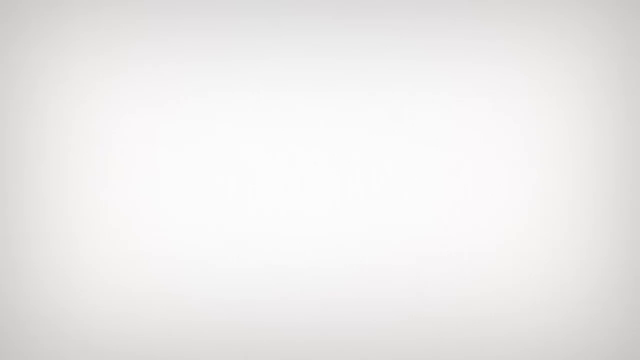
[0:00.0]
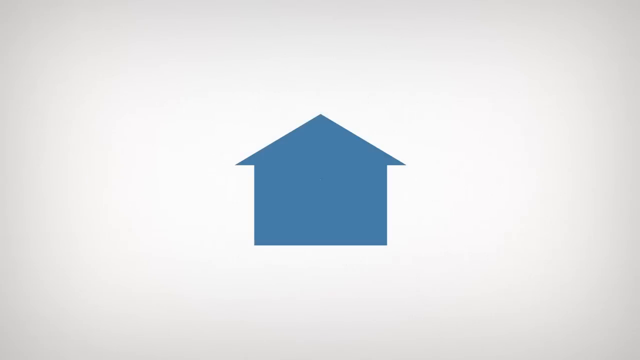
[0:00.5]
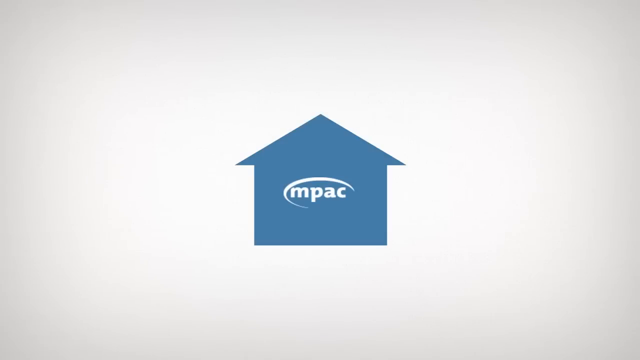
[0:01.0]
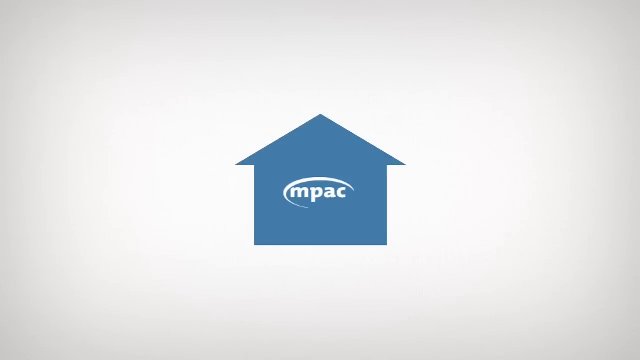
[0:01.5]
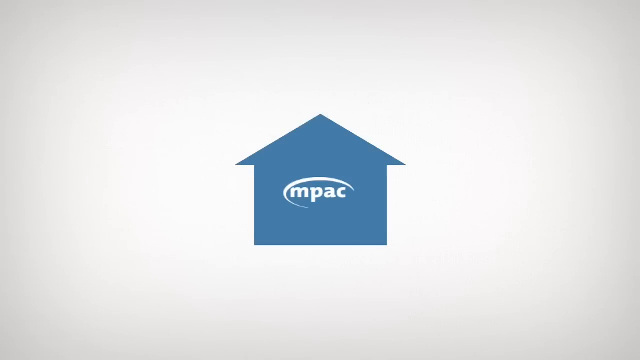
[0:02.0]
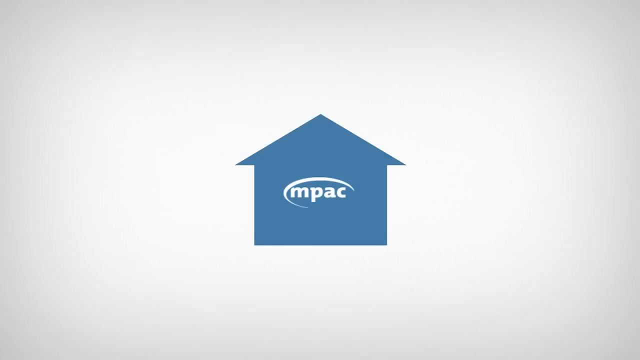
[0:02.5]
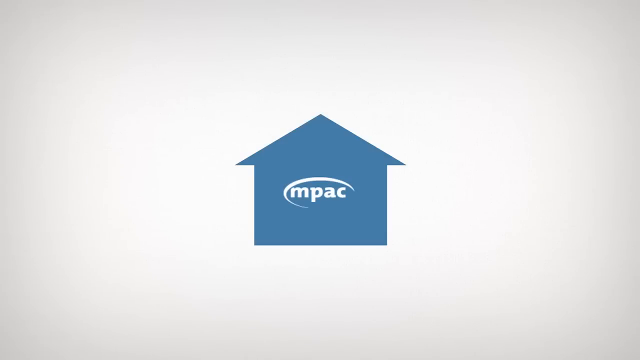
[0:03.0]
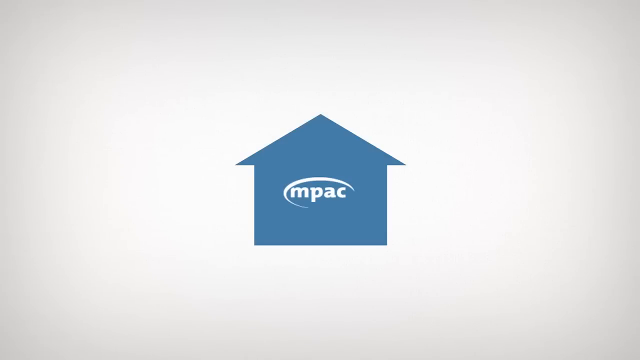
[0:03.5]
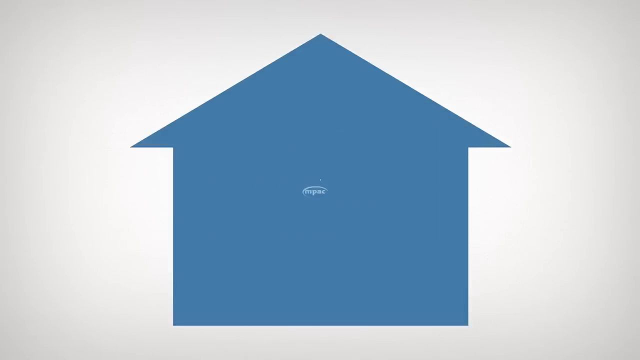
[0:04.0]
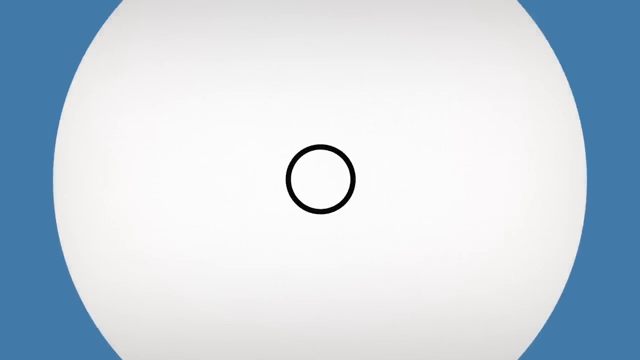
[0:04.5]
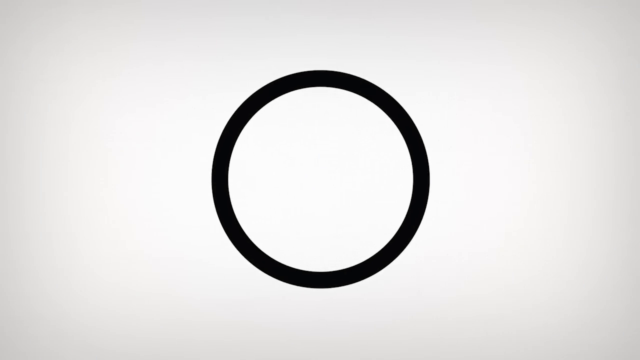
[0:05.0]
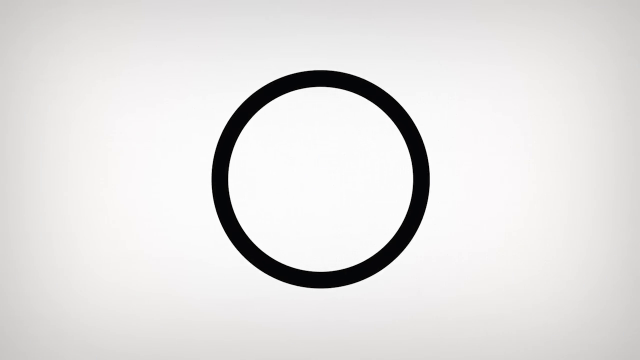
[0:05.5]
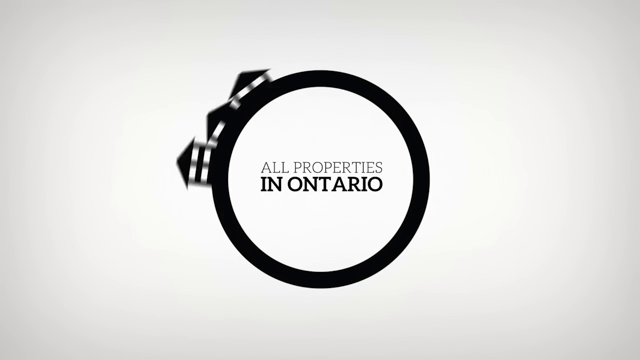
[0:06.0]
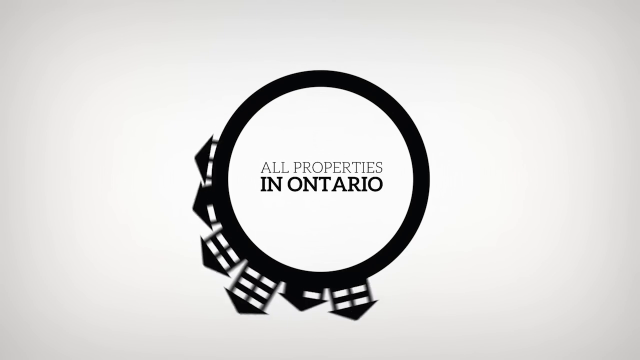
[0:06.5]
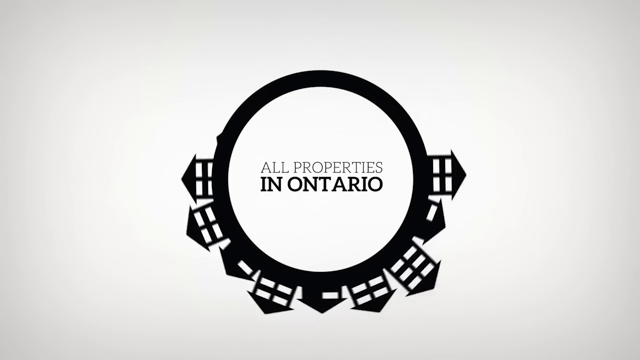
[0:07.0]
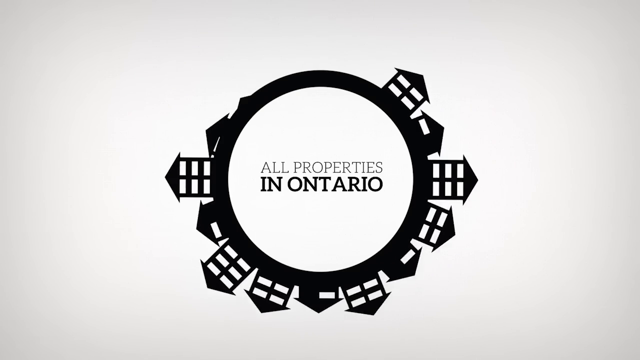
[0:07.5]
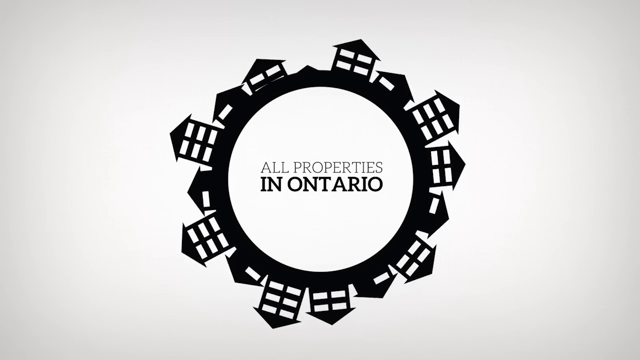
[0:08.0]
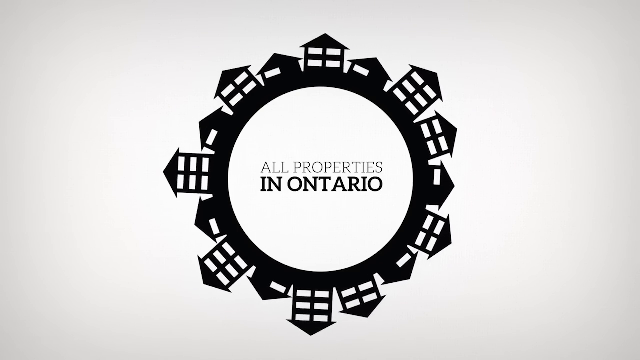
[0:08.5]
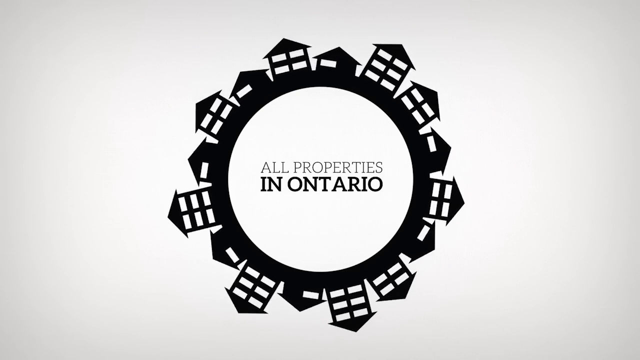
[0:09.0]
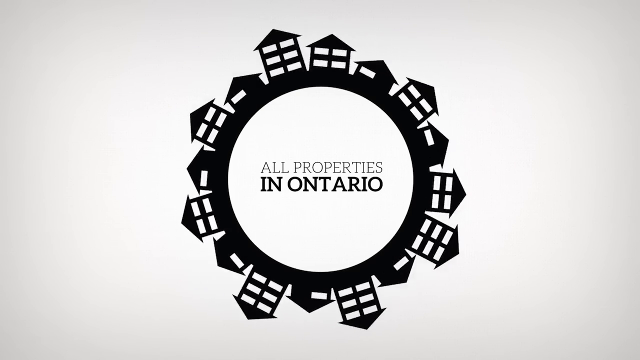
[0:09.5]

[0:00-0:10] On a whitish-gray screen, the outline of a house appears in a logo that reads "MPAC" in white letters, with an oval outline around it. This stays on screen for about three seconds, then the view zooms in and changes to another image, again on a whitish-gray background, with the text "all properties in Ontario" in gray, encircled by a black ring. As the text inside the ring turns from gray to black, 2D outlines of houses appear to start lining the ring. Finally the ring is entirely surrounded by images of houses, and it starts to spin.